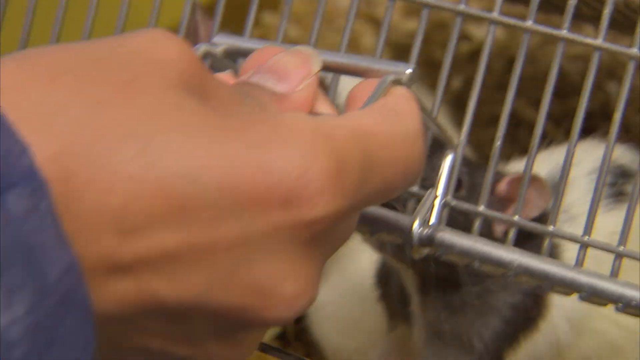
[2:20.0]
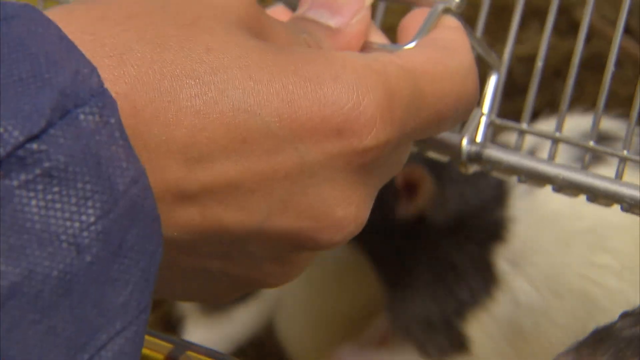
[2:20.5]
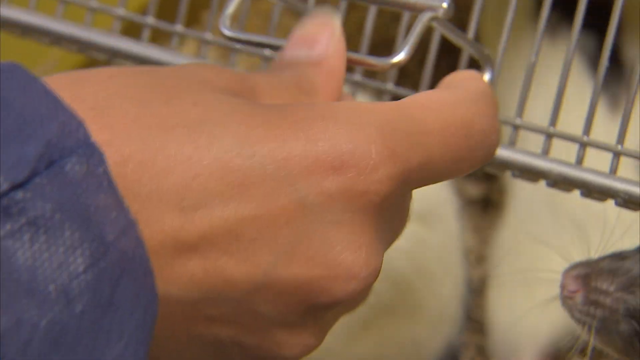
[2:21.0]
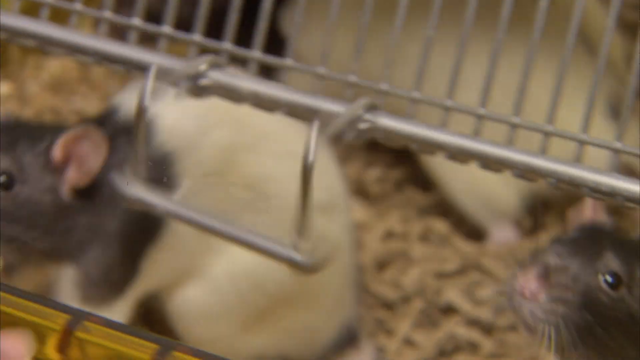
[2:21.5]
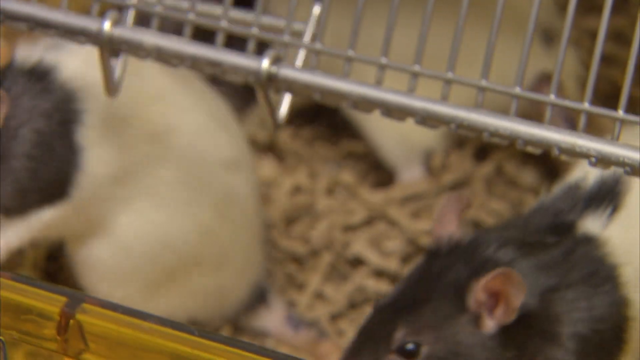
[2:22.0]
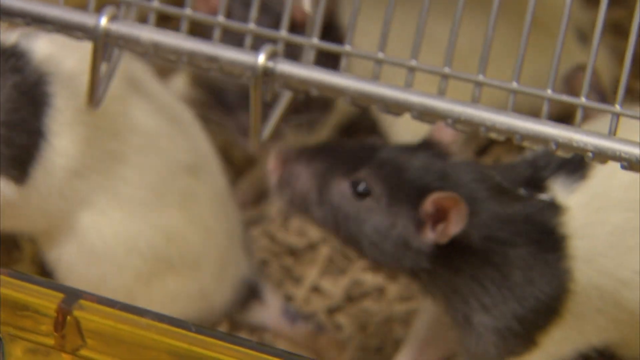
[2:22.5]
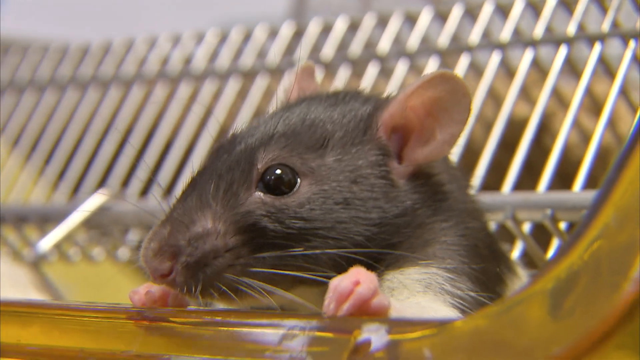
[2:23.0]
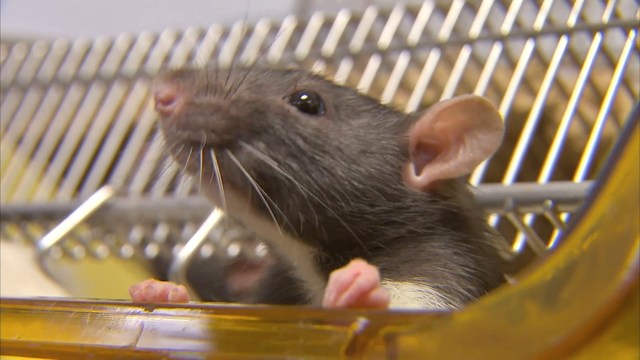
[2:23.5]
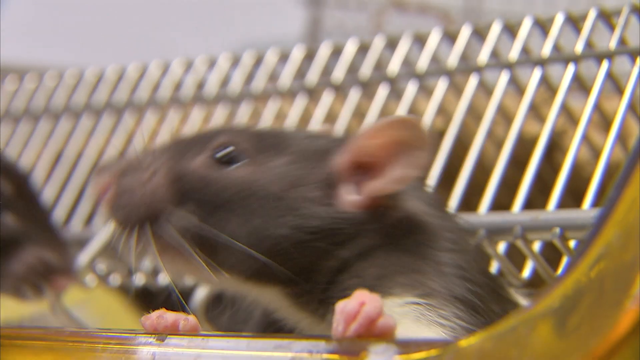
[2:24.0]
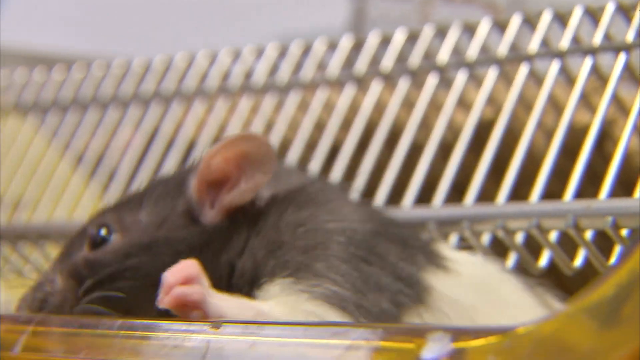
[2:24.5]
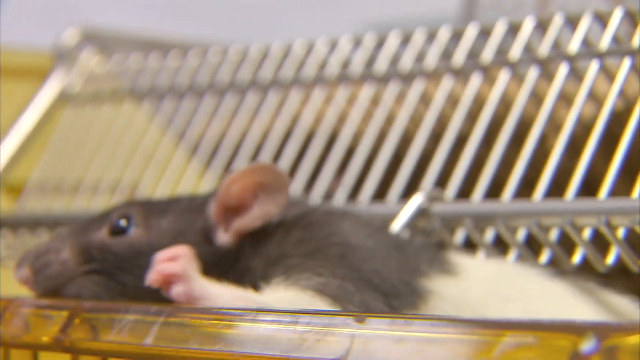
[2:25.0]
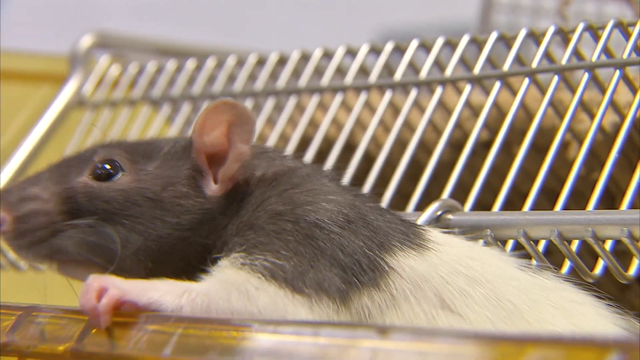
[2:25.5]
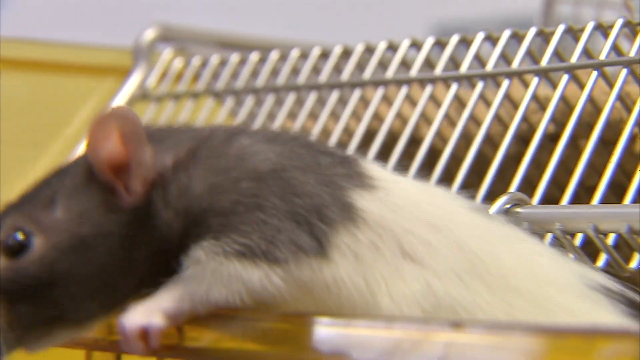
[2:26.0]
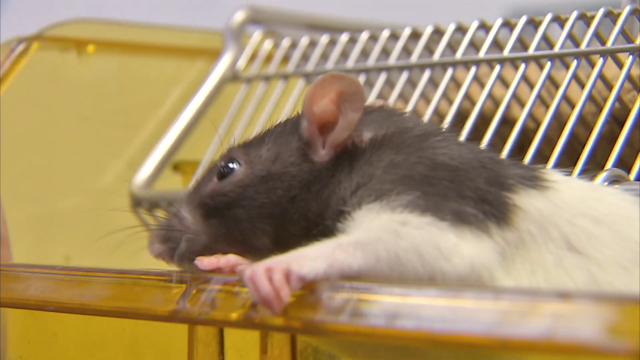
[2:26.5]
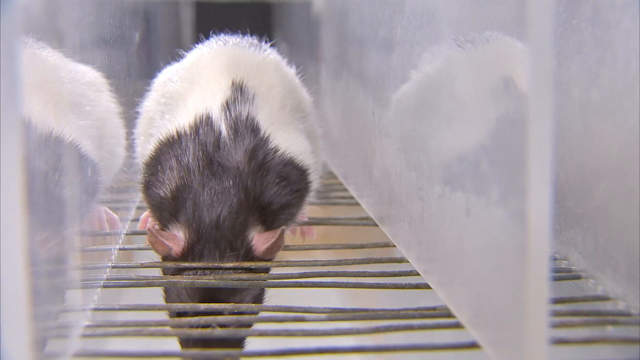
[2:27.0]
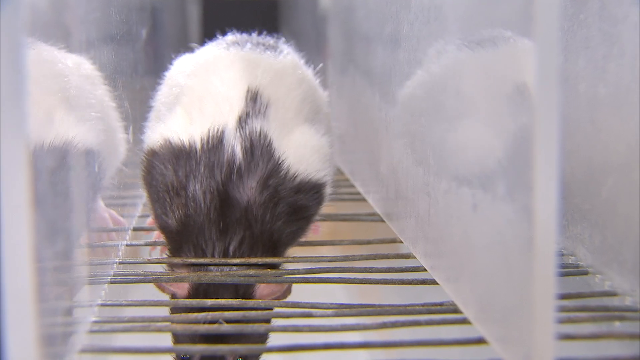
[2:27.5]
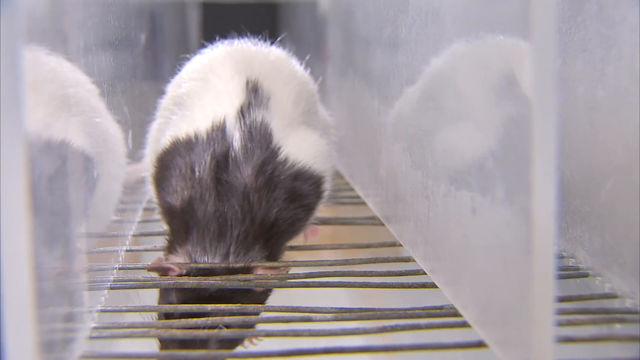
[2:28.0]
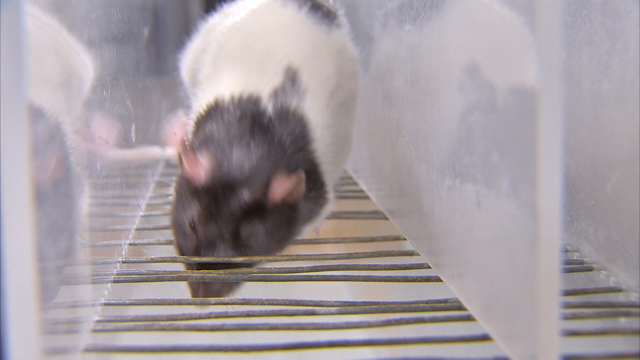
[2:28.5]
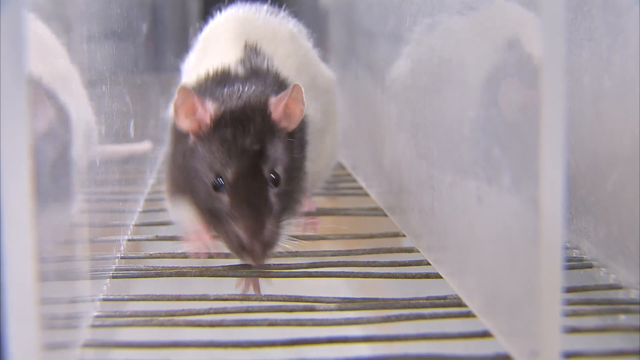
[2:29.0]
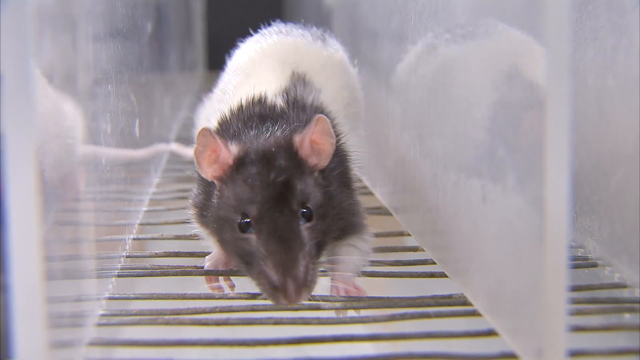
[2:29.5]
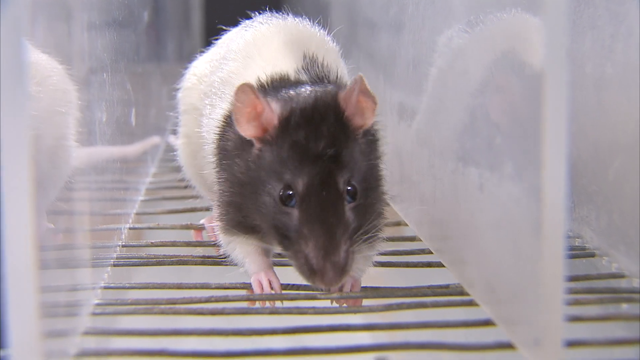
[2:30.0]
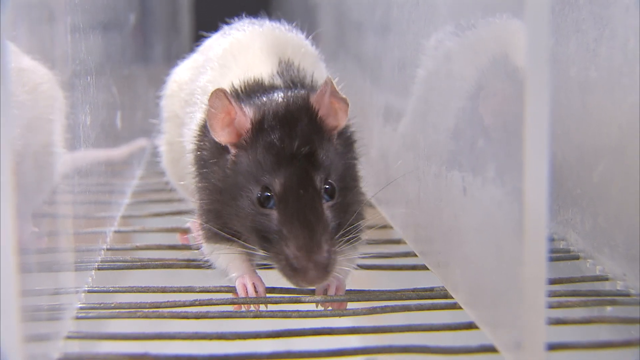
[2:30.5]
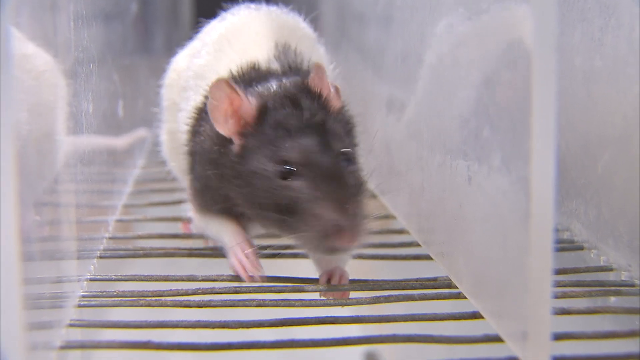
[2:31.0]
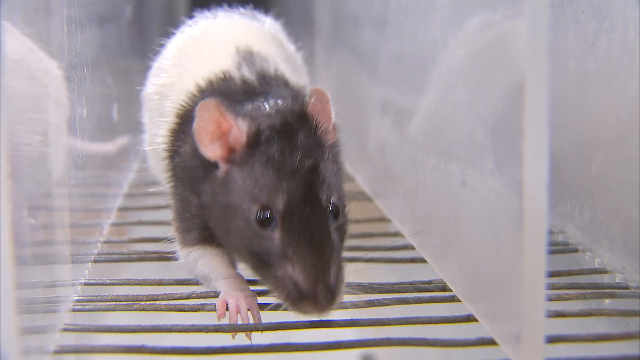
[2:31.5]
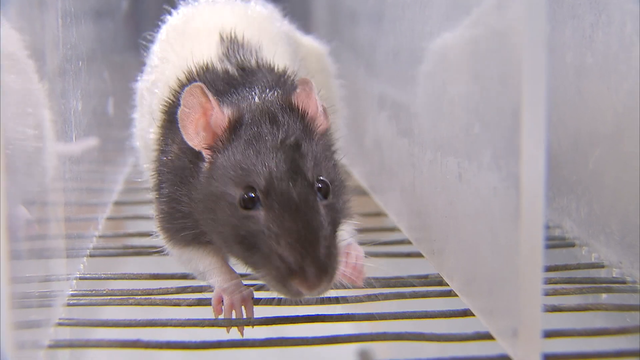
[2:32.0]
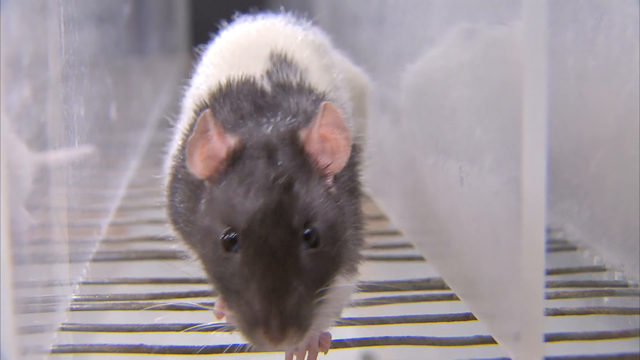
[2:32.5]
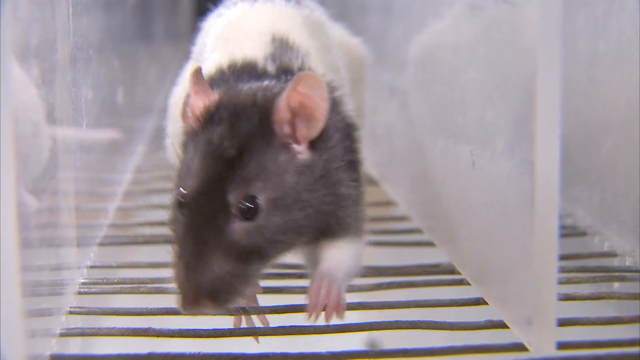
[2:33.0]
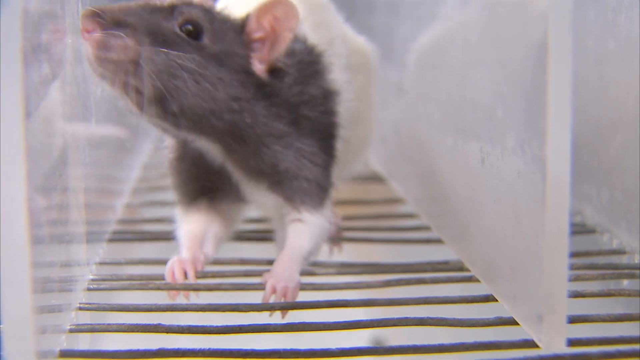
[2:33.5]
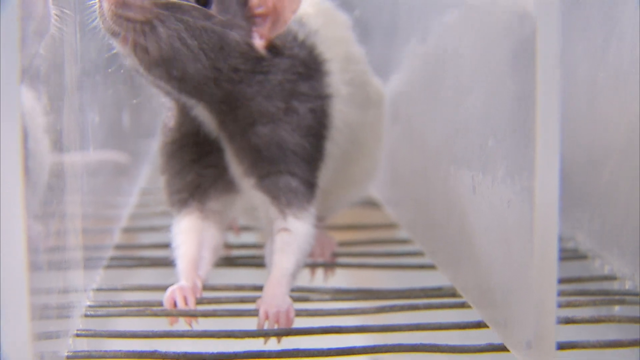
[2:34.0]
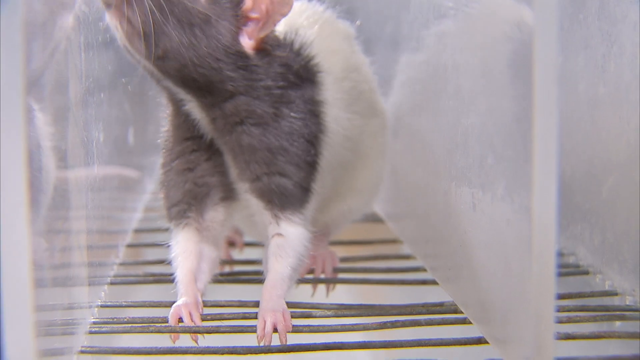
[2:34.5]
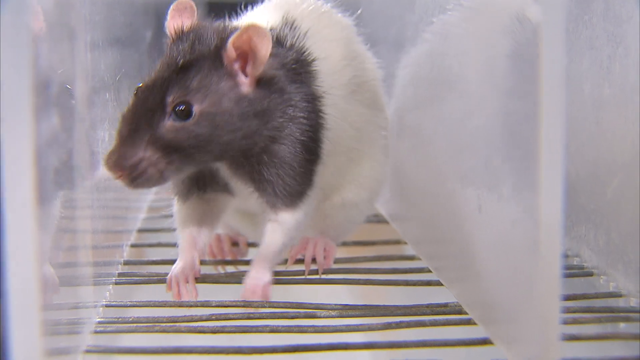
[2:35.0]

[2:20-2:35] A close-up shows one of the yellow cages with metal bars. A scientist in a blue overall is shown in a close-up of their hand opening one of the cage's latches, and three rats come up to the exit. A very close shot shows one rat, with white fur and black spots, trying to climb out of the cage and seemingly sniffing the scientist's hand. The video cuts to a close-up of one of the white see-through plastic cages, where a brown and white rat with little brown spots moves along the very narrow walkways. It turns its head to one side and seems to be balancing on thin pieces of wire.